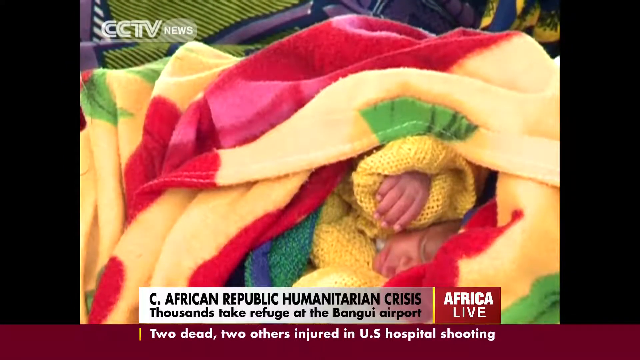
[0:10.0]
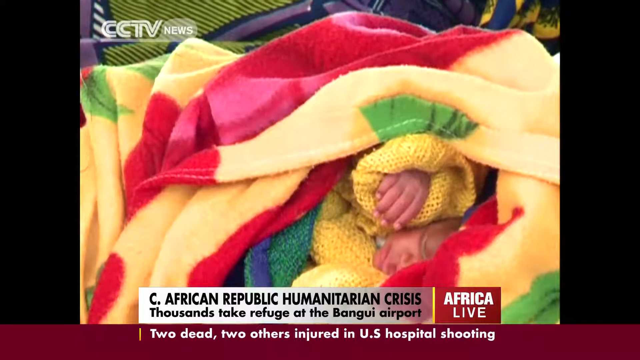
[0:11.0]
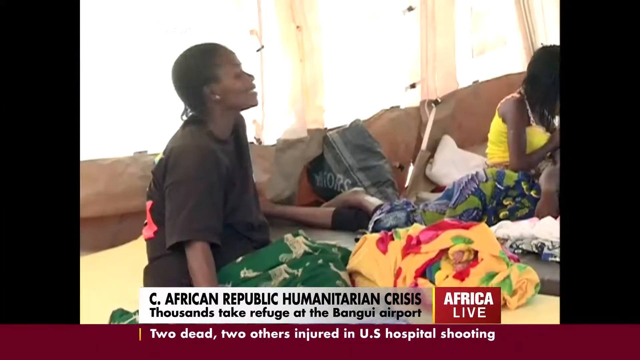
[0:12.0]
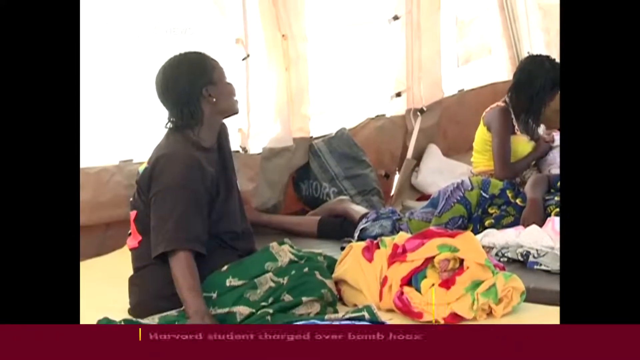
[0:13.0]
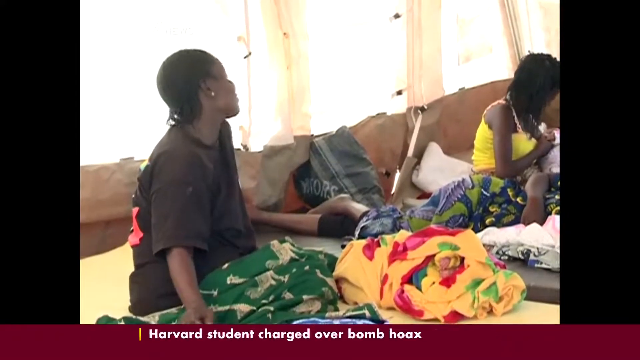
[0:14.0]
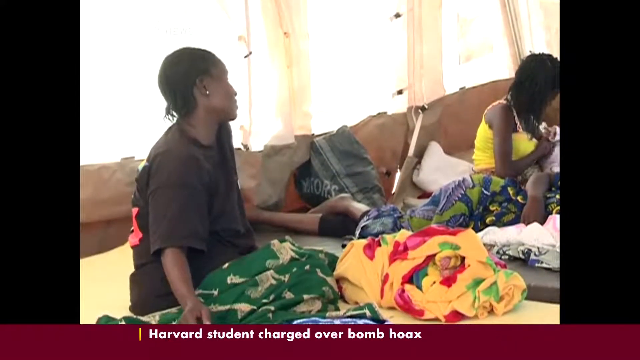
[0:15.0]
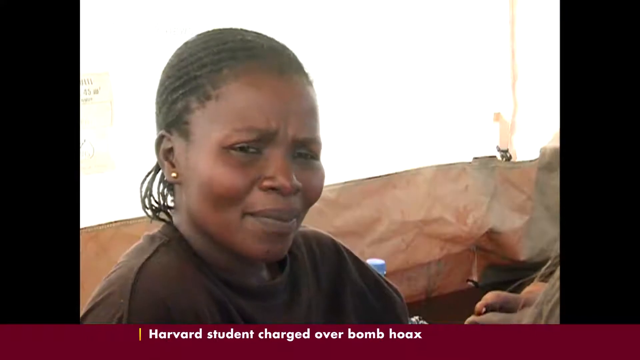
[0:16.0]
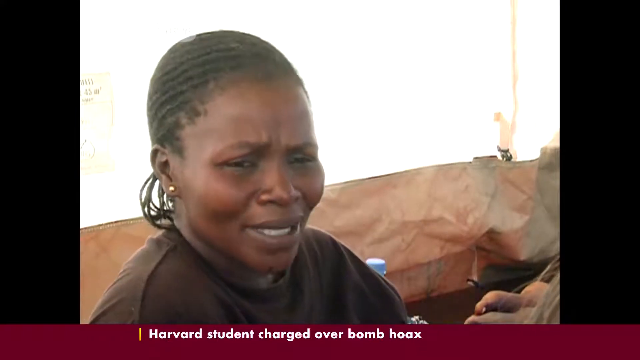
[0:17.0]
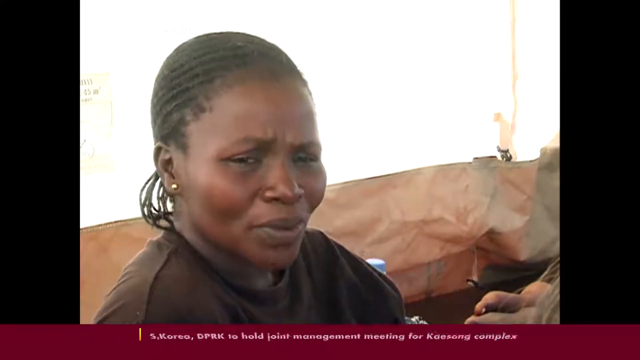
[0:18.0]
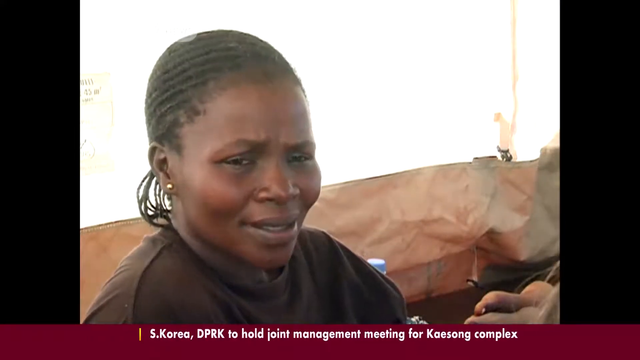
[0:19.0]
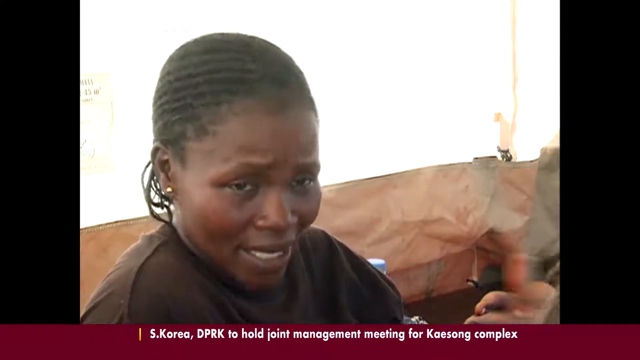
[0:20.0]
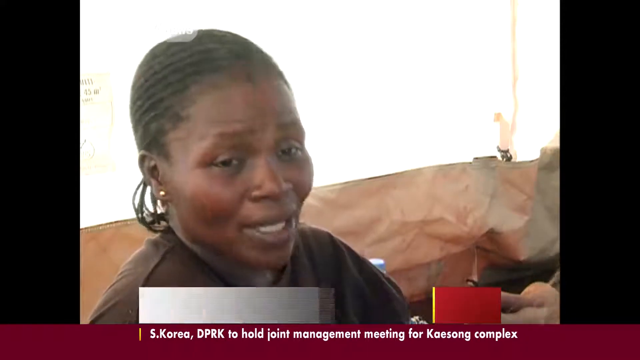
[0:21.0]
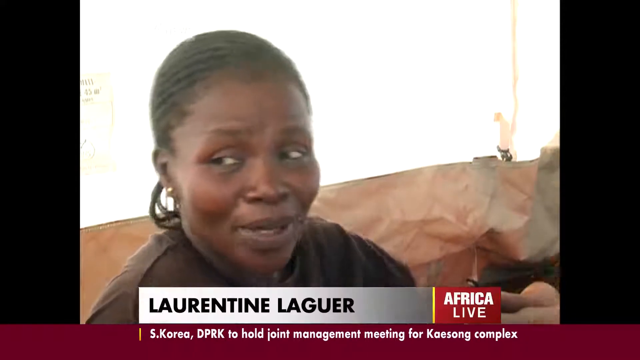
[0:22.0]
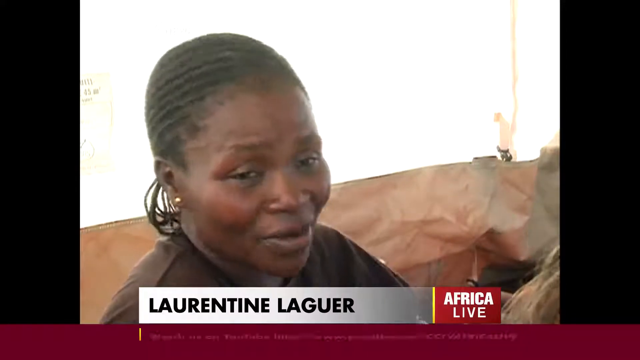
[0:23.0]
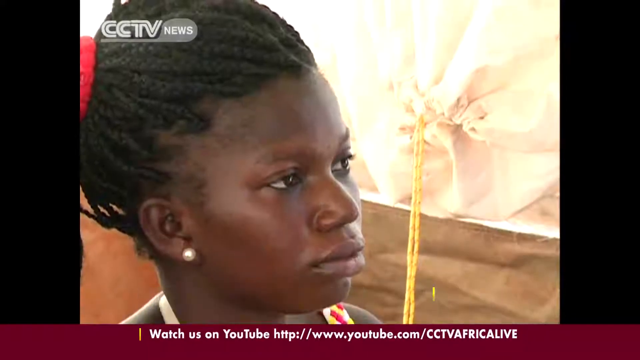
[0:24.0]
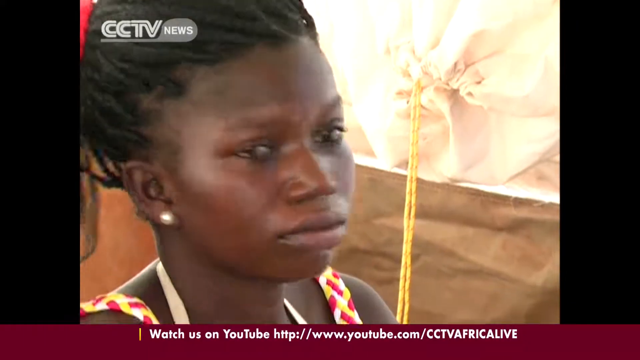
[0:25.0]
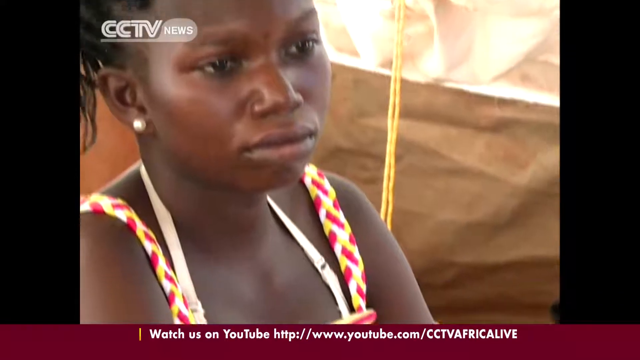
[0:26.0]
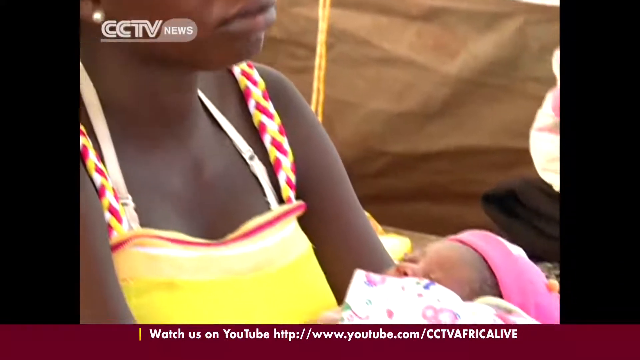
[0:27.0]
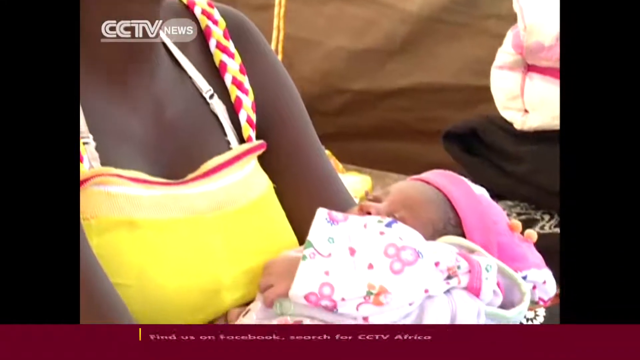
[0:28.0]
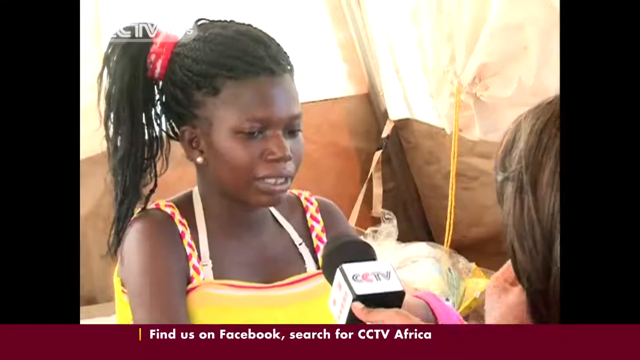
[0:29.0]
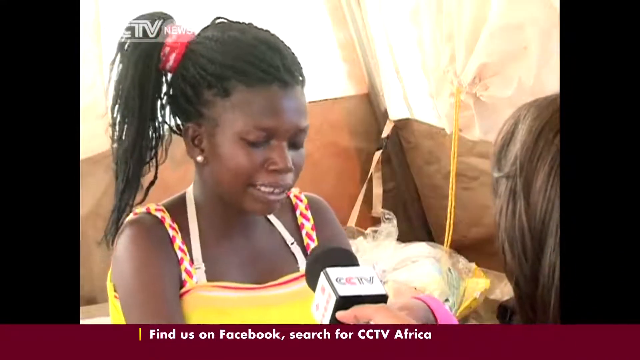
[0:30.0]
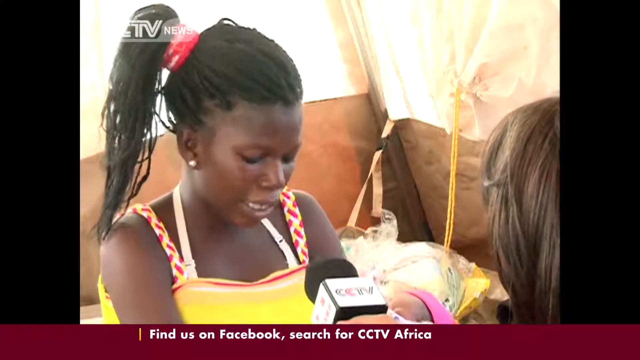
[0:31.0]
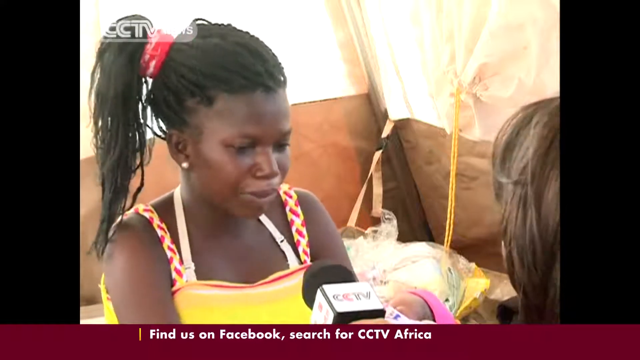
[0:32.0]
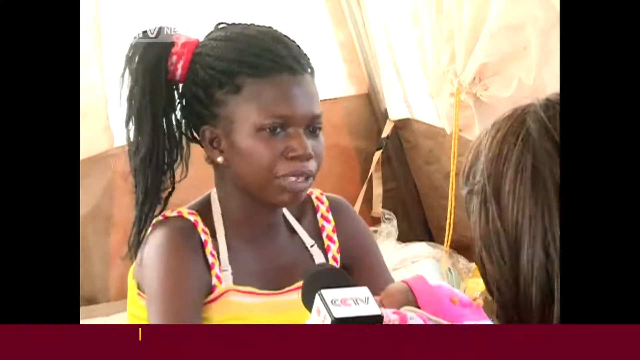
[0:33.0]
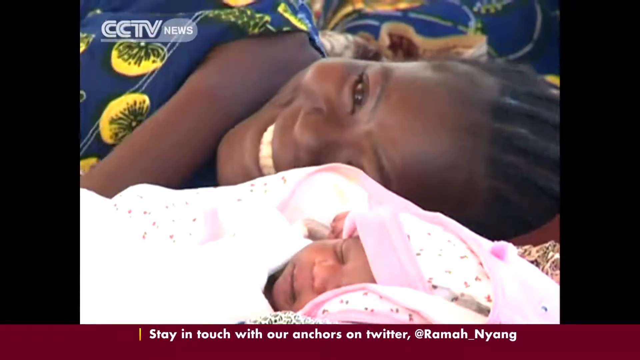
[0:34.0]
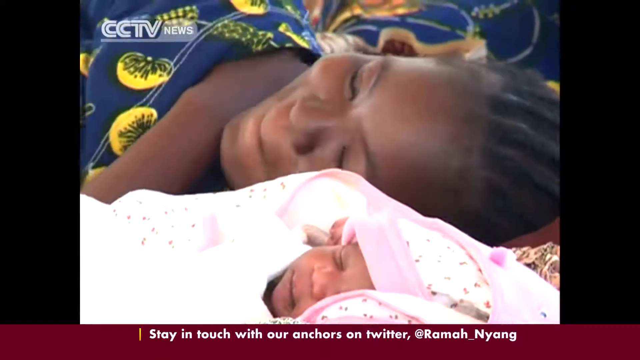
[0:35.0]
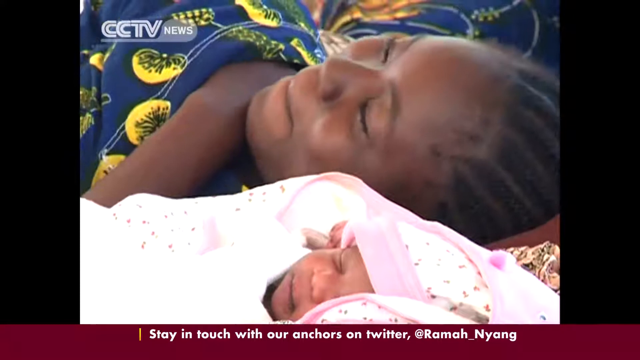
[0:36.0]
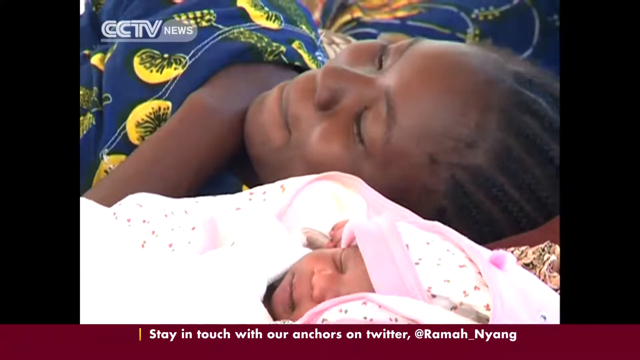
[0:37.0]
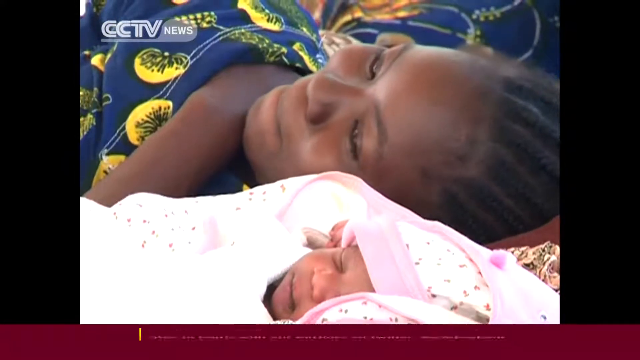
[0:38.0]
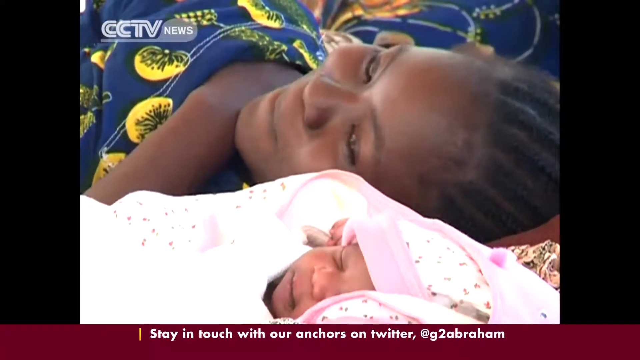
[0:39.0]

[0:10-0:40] In a news program, text reads "African Republic humanitarian crisis thousands take refuge at the Binghai Airport," and "Africa Live" appears at the bottom right. Someone in a colorful sweater has their head and right arm sticking out of a set of colorful yellow, red and green blankets. Women are sitting in this area; one appears to be lying on a mattress on the ground, and two others sit upright, the one on the left wearing a t-shirt. They look off to the right and speak, and in close-up shots they use their left hand in an animated way as they talk. Their name briefly appears at the bottom of the screen. Another woman wears a yellow dress, holds a baby, and has her hair kind of pulled up into a ponytail. A reporter speaks to them and holds a microphone to them. Another woman lies next to her baby, smiling. Briefly, an exterior shot shows some people standing in line.